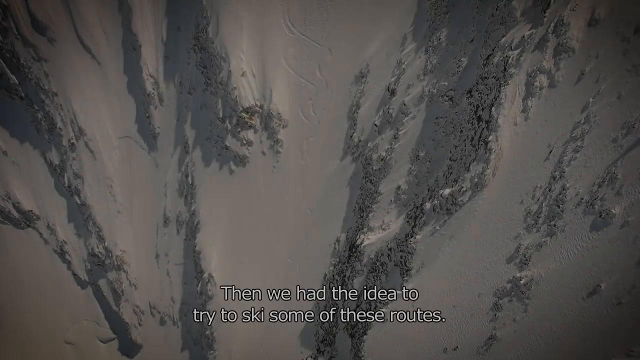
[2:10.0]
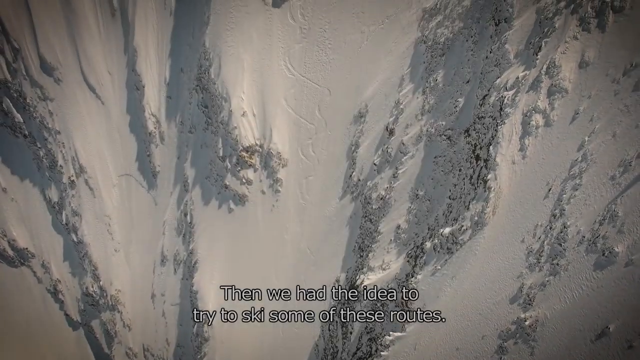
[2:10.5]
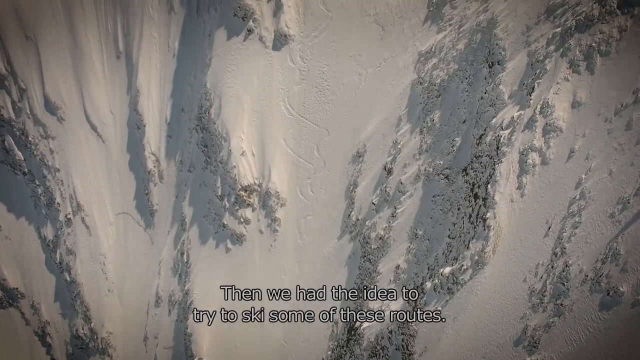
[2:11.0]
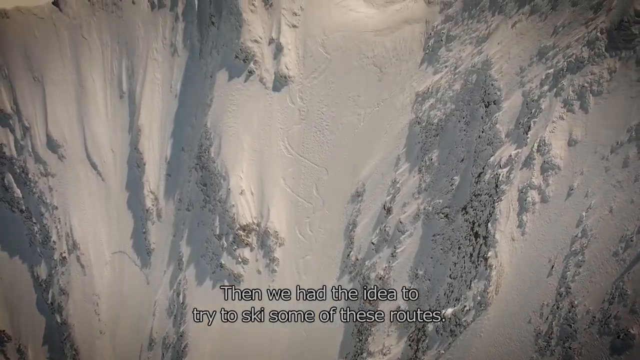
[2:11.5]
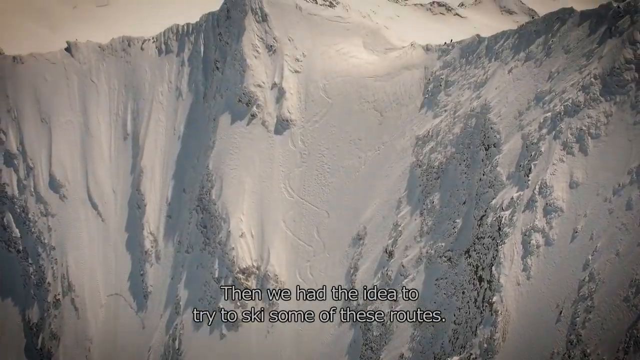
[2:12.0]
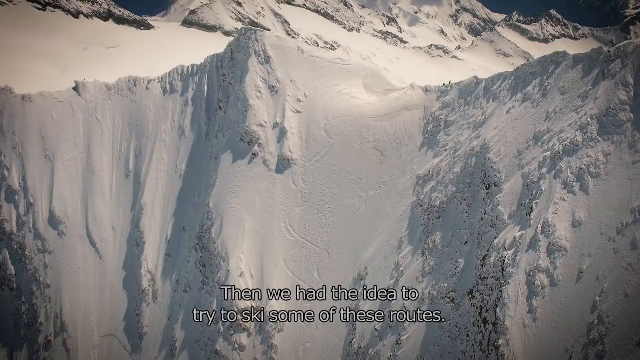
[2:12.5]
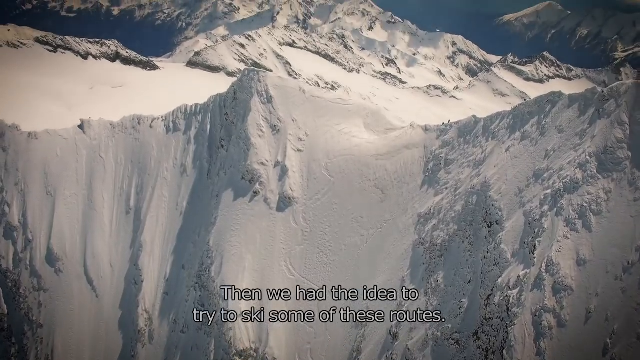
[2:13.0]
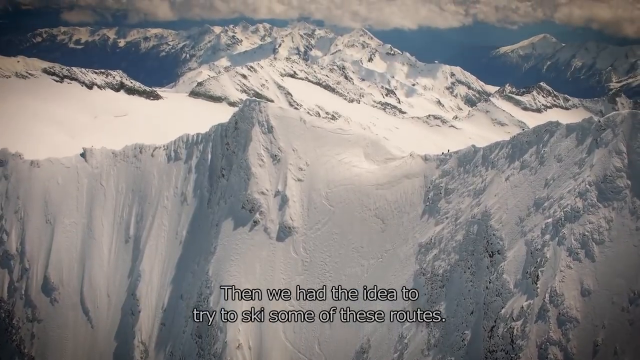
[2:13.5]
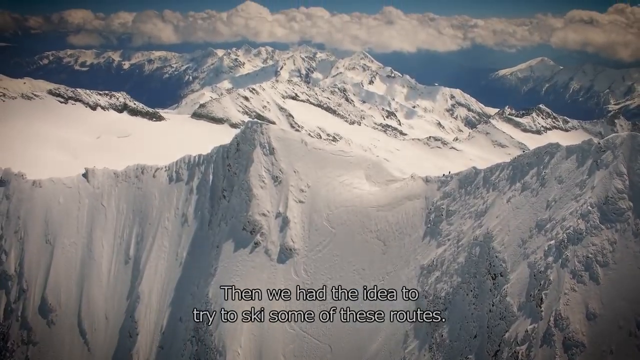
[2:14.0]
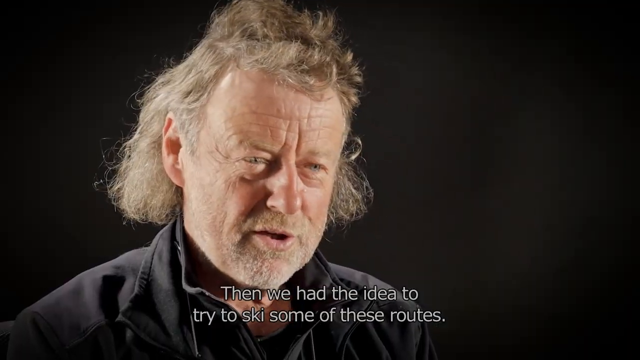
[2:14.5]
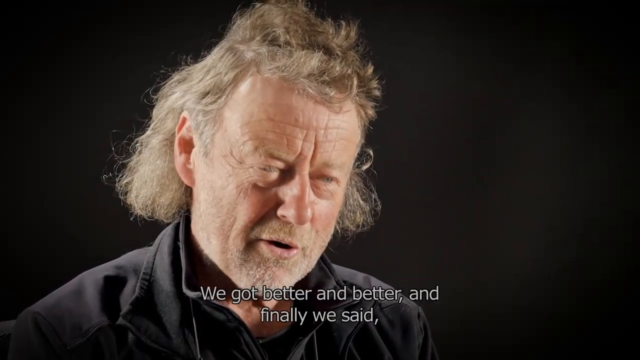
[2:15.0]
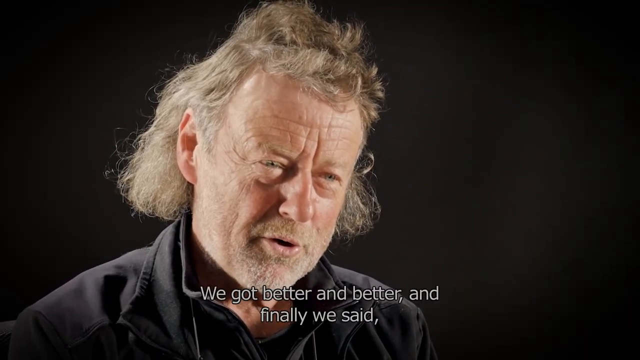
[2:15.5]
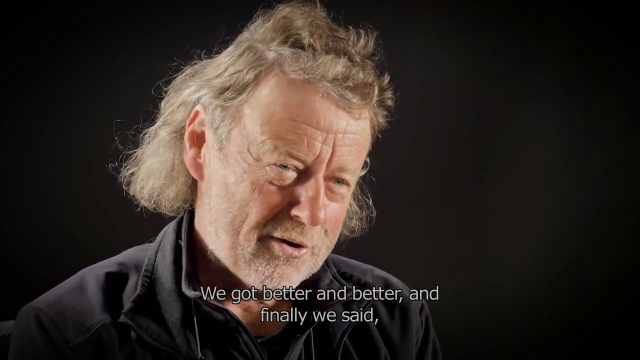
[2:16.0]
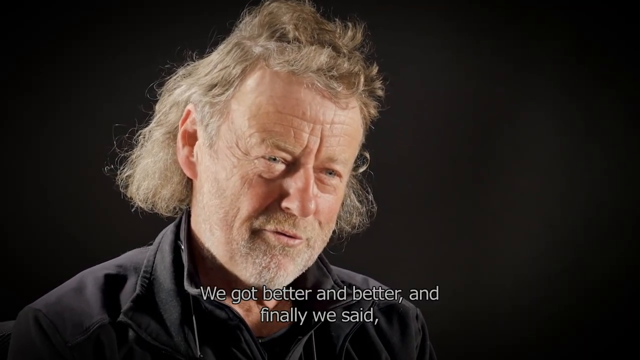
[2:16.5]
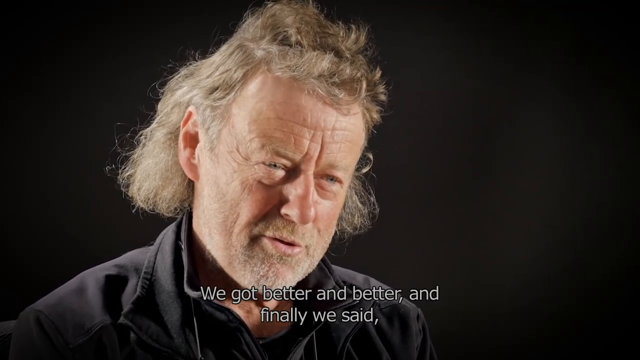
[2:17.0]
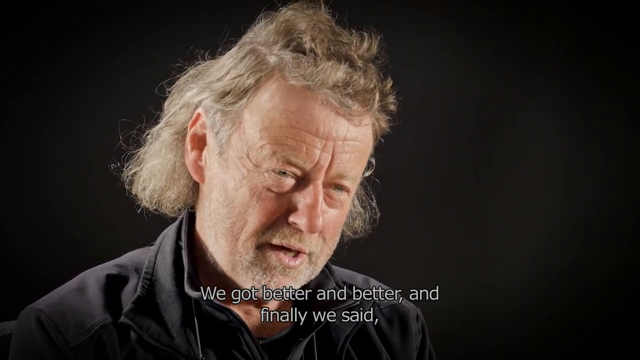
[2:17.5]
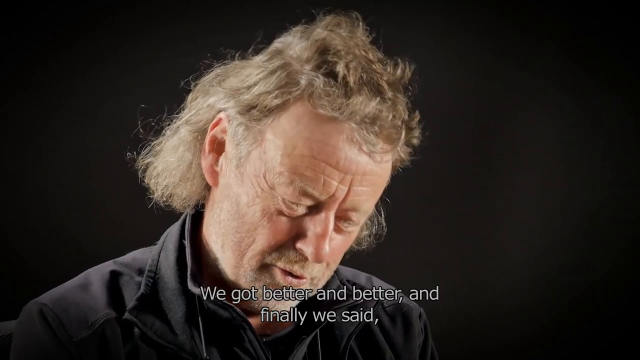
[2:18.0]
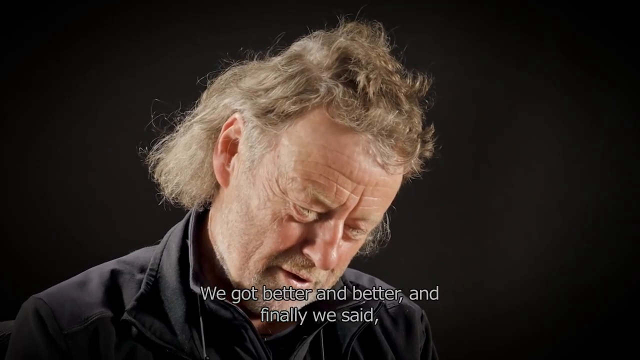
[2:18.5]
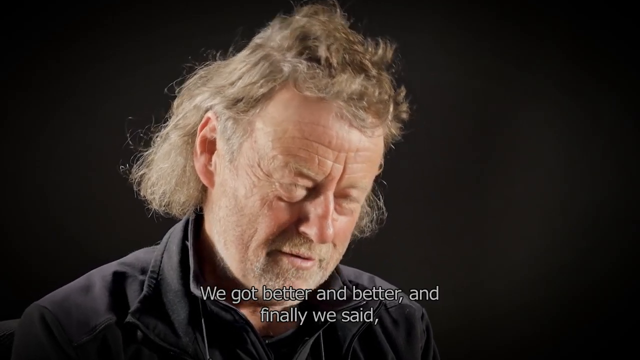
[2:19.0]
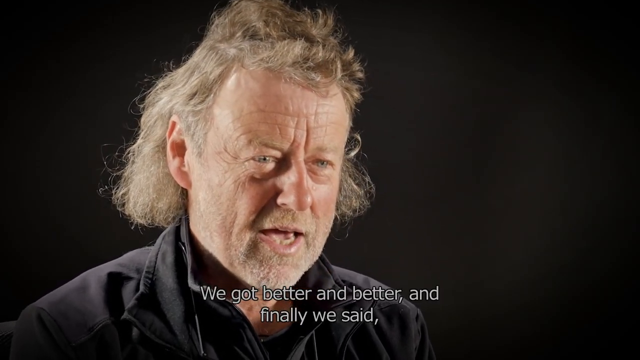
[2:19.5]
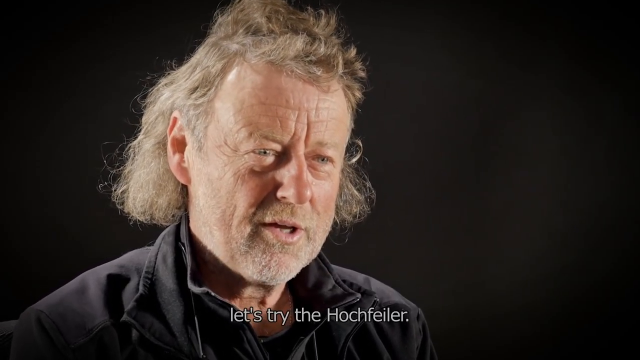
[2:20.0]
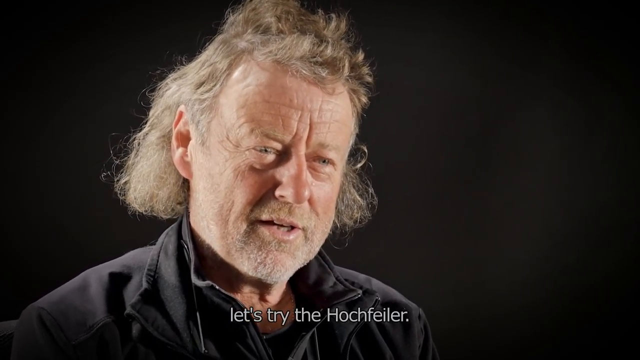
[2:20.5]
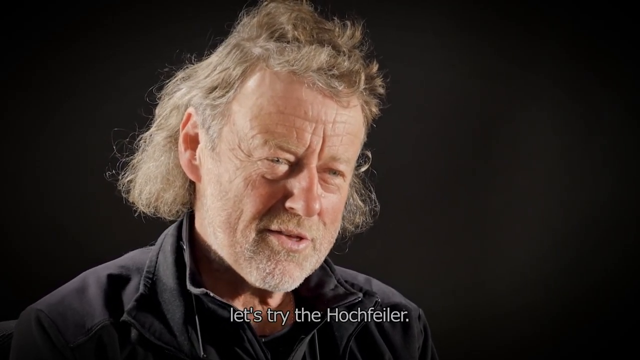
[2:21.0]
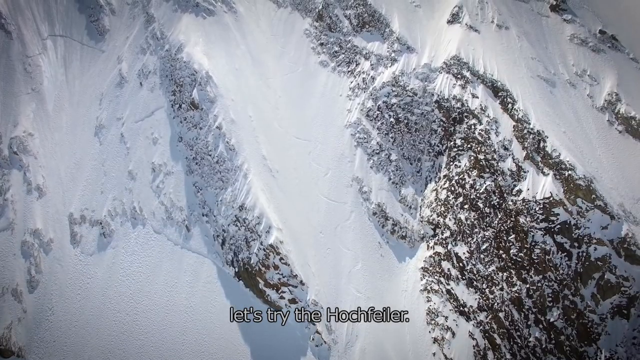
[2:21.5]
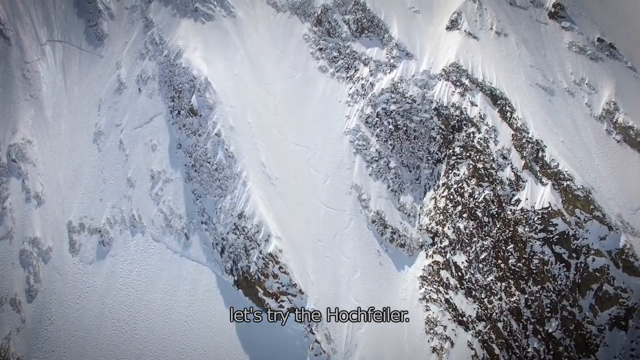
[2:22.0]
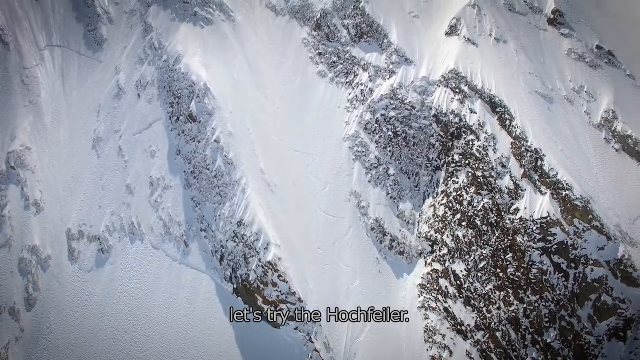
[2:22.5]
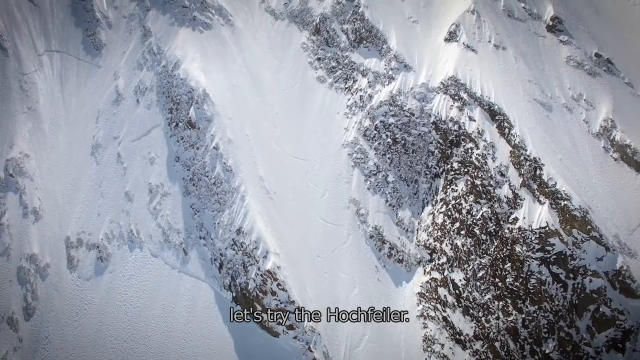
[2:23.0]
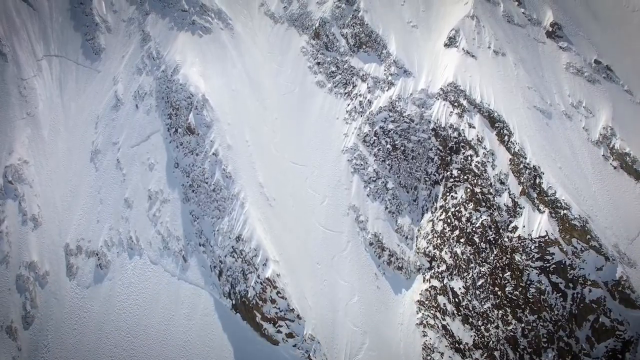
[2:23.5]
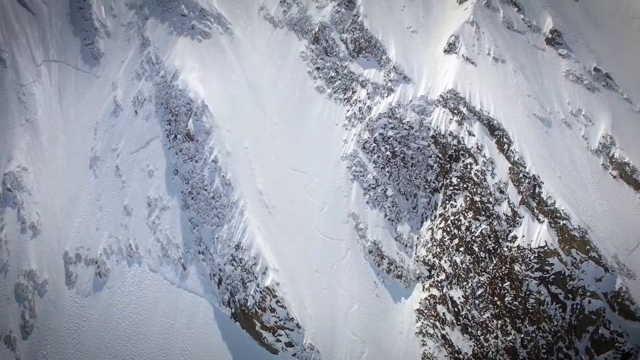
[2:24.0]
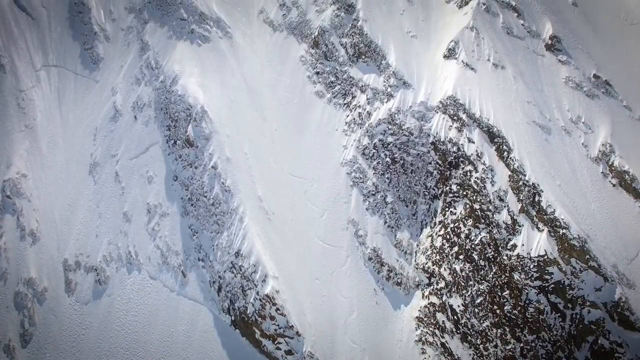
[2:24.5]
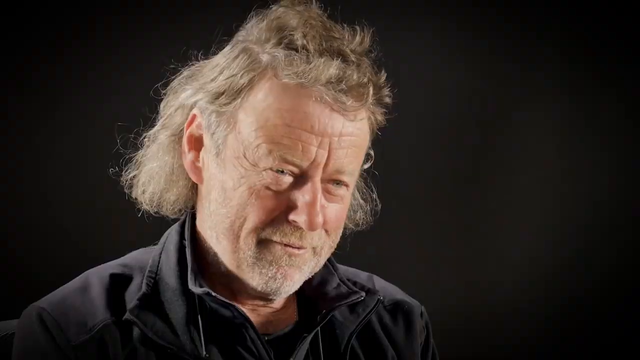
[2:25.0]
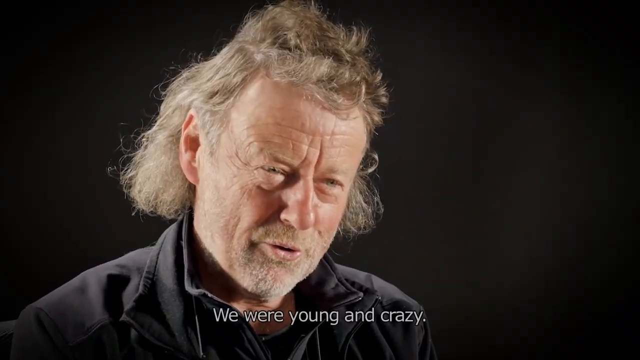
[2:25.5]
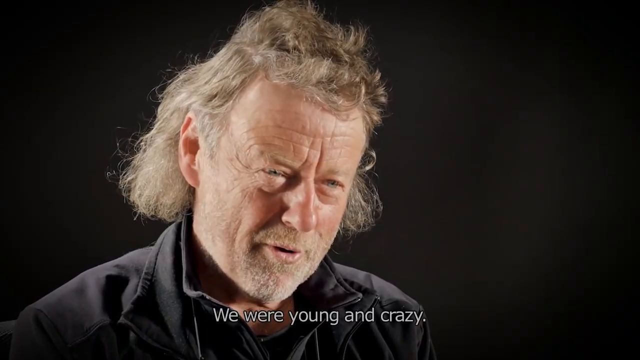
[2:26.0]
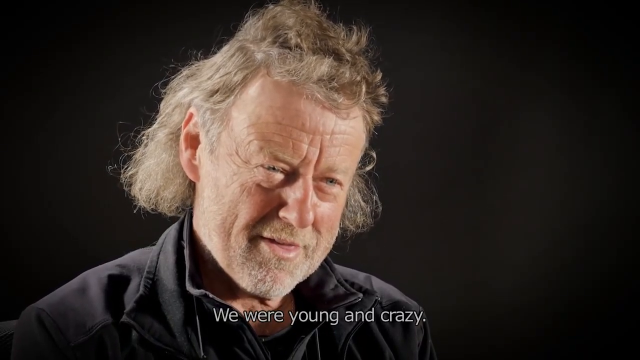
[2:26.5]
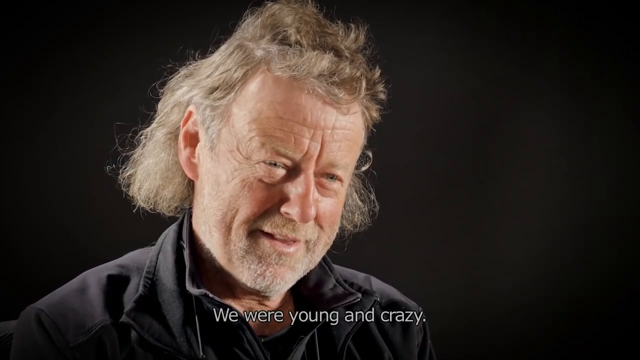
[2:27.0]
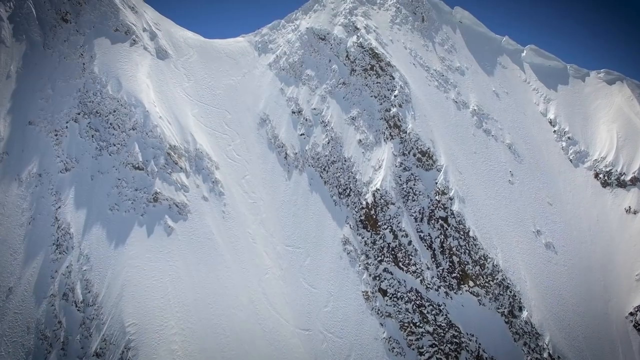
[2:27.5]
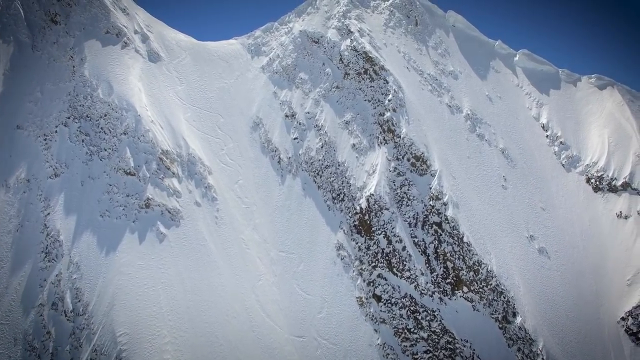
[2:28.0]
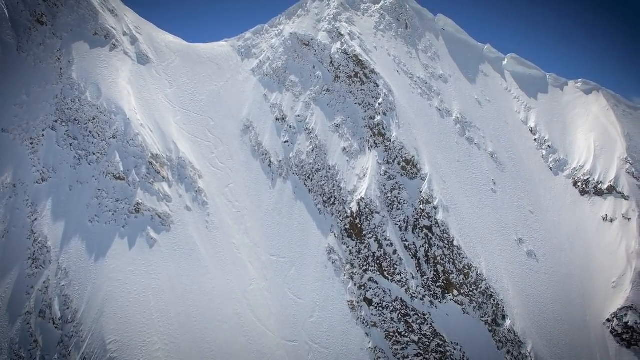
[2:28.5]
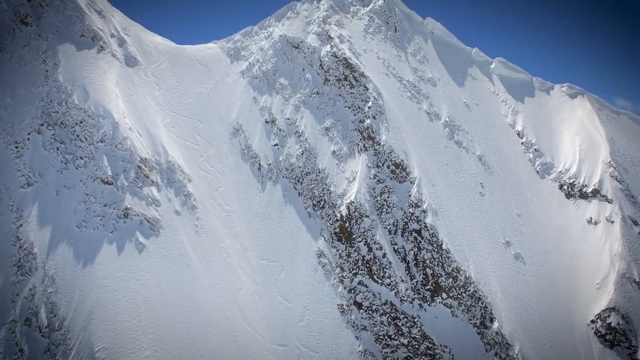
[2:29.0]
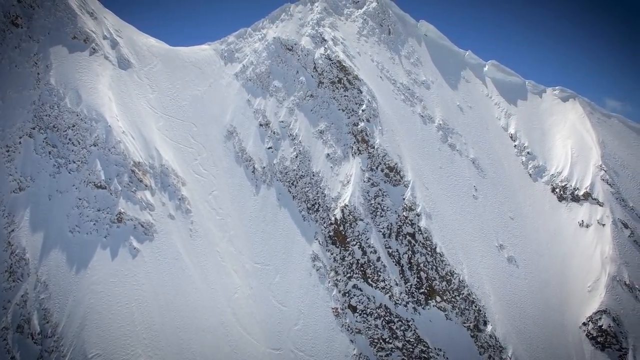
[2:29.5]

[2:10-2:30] The mountains are white and covered in snow, and the man continues to speak as his captions are shown at the bottom of the screen. They read: "then we have the idea to try to ski some of these routes. We got better and better and finally we said, let's try the". As the man speaks, the tops of the mountain ranges are shown, and he is smiling. There is a very steep slope from the top of the mountain to the bottom, and there seems to be no route to follow.